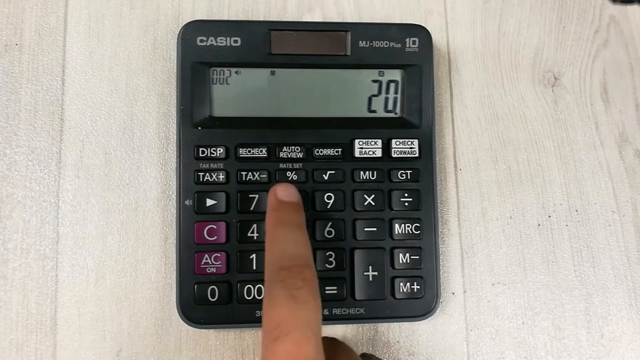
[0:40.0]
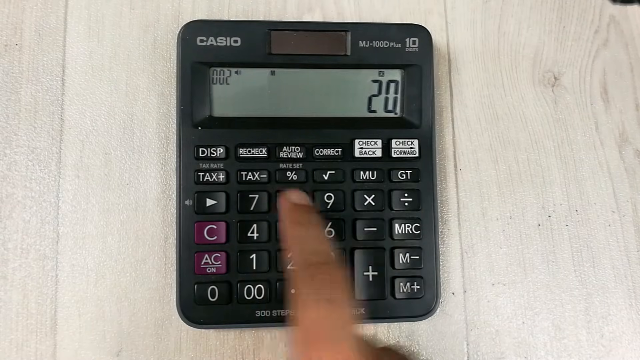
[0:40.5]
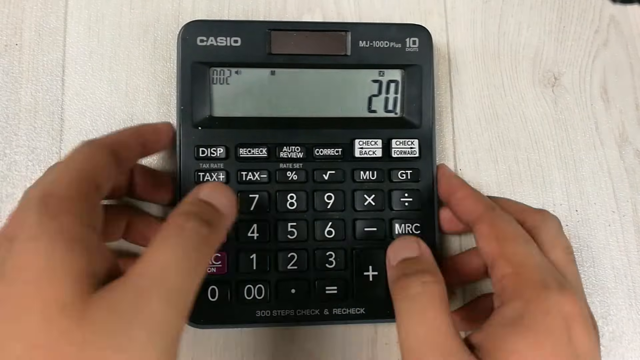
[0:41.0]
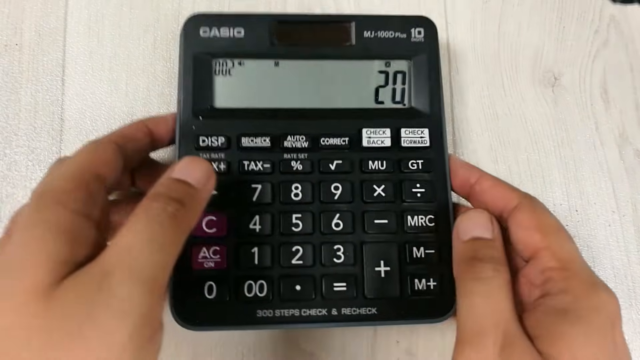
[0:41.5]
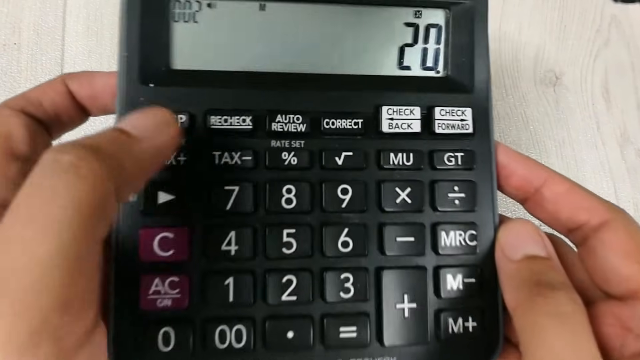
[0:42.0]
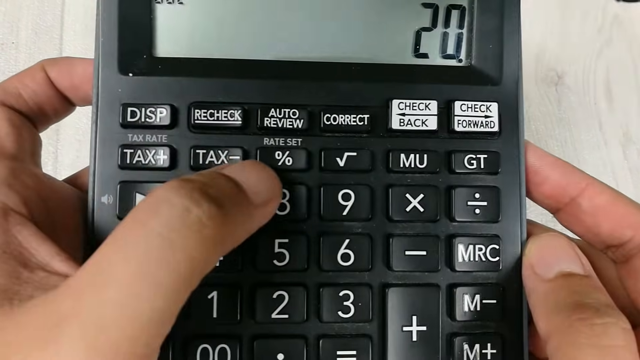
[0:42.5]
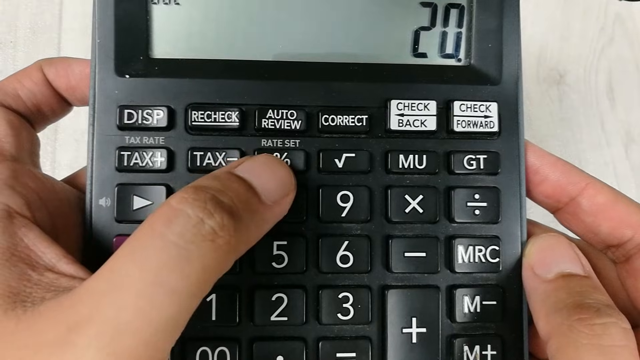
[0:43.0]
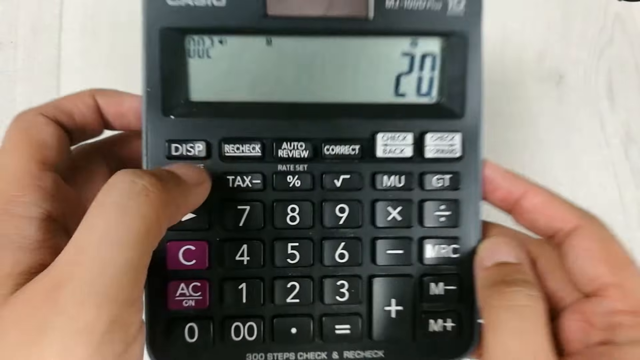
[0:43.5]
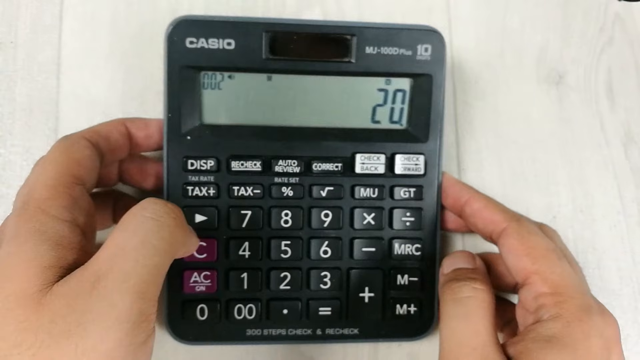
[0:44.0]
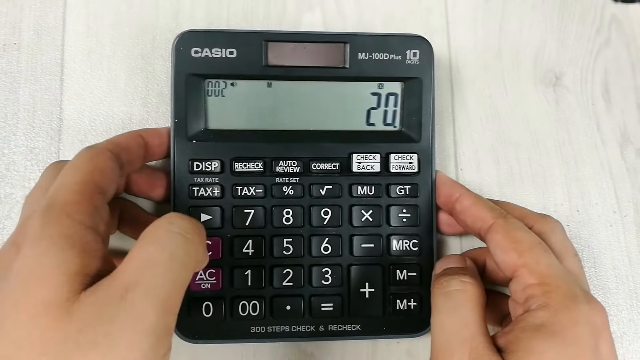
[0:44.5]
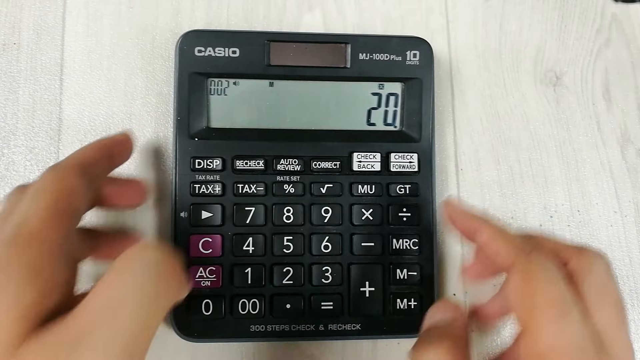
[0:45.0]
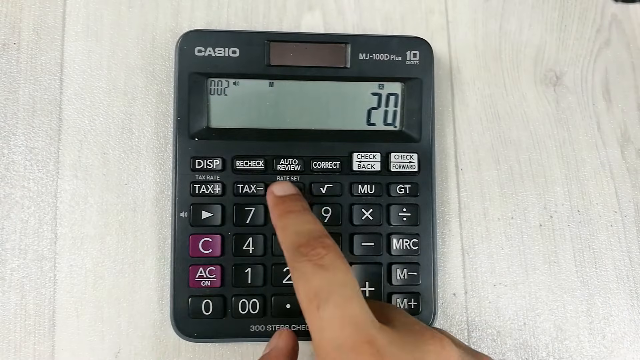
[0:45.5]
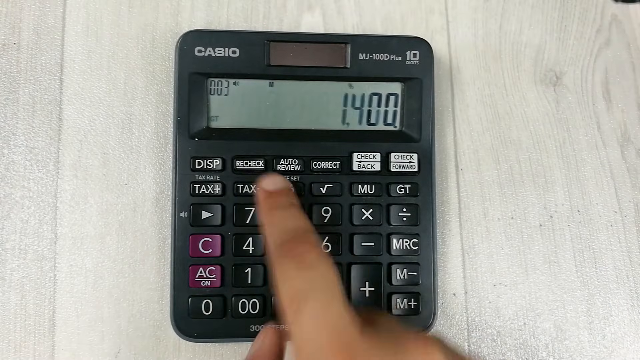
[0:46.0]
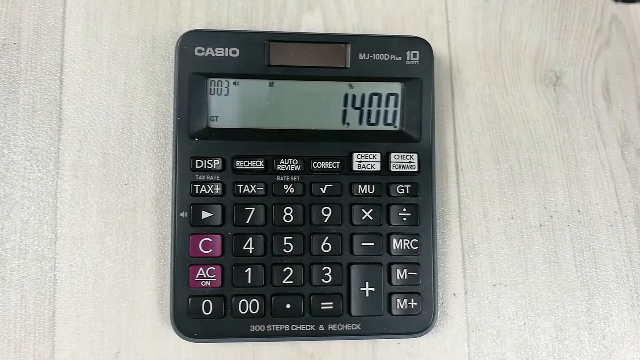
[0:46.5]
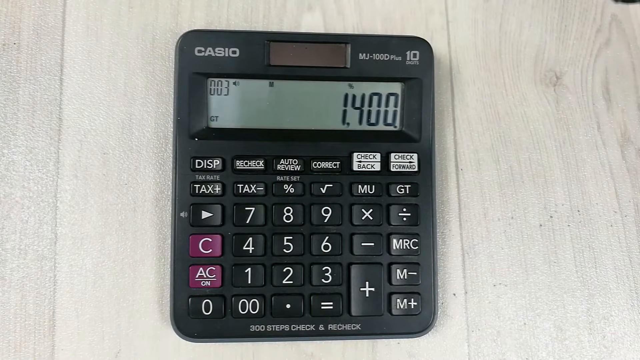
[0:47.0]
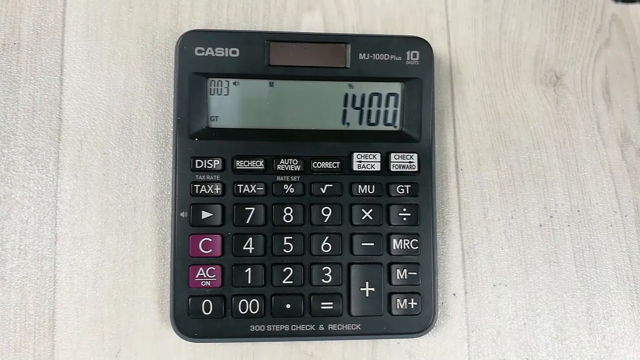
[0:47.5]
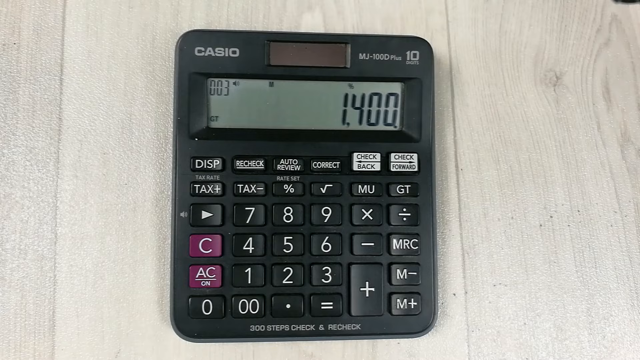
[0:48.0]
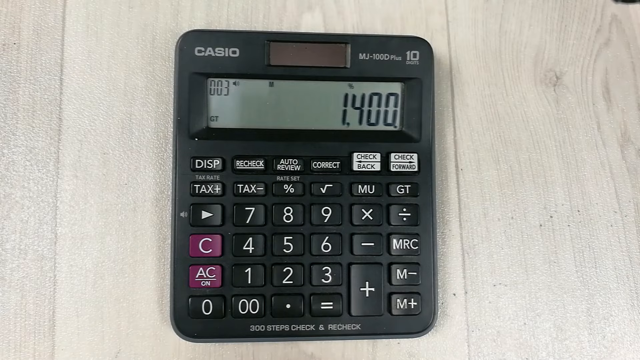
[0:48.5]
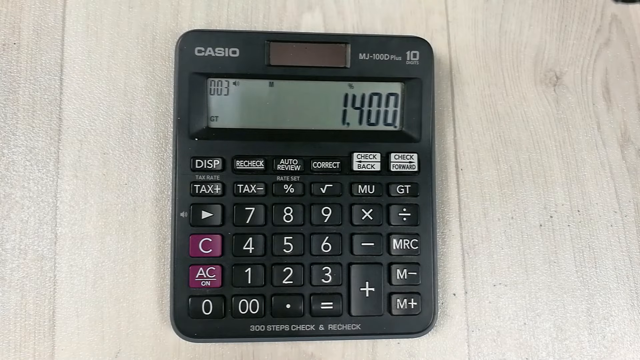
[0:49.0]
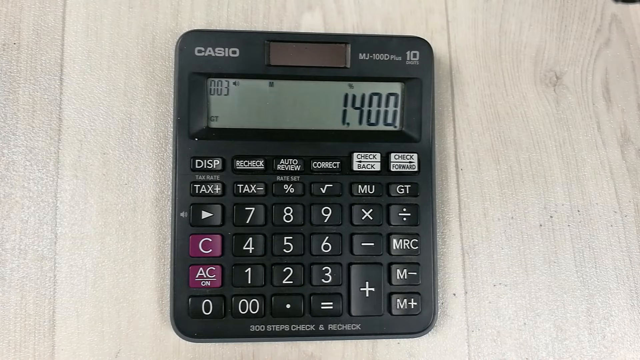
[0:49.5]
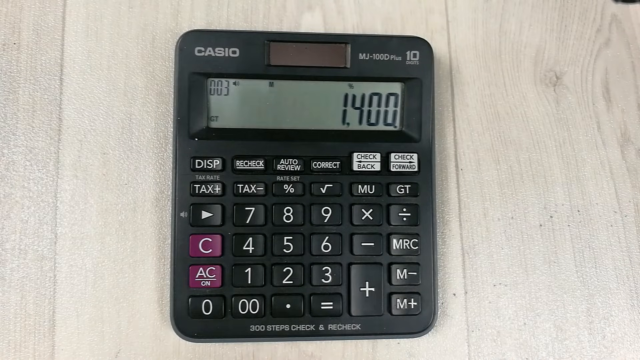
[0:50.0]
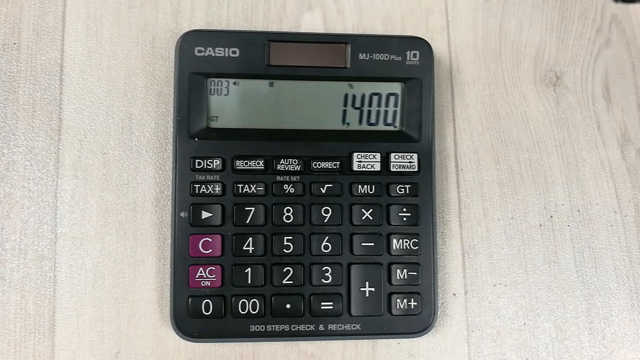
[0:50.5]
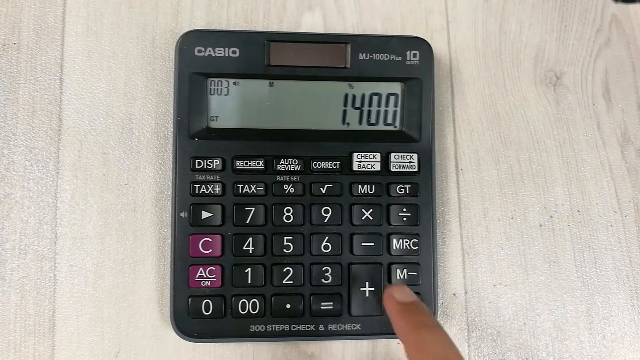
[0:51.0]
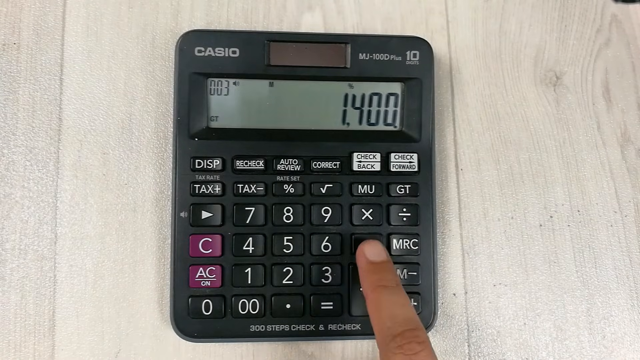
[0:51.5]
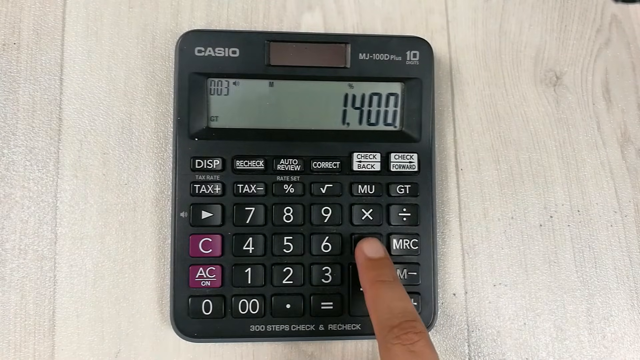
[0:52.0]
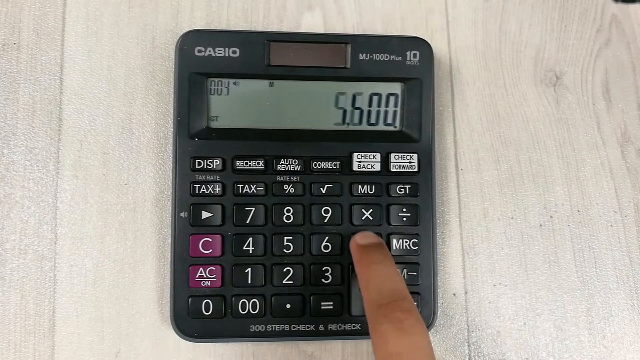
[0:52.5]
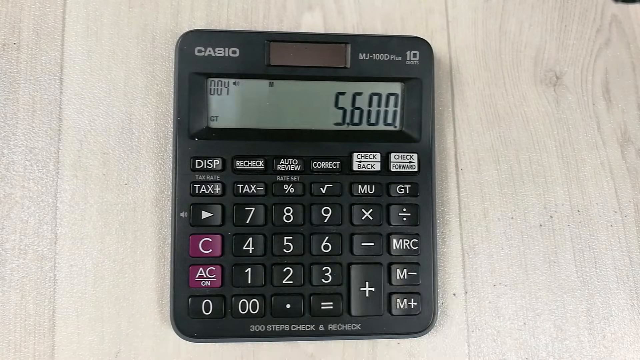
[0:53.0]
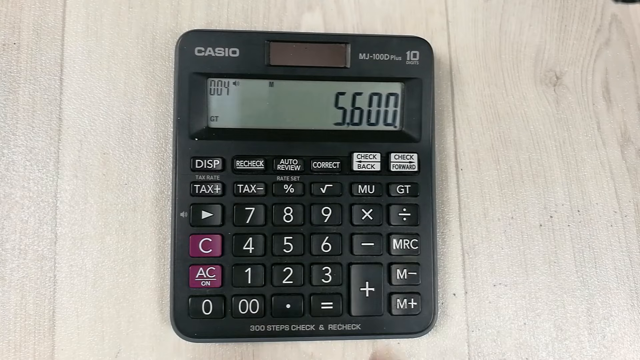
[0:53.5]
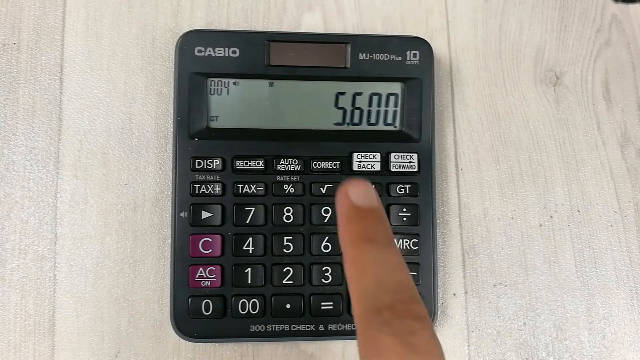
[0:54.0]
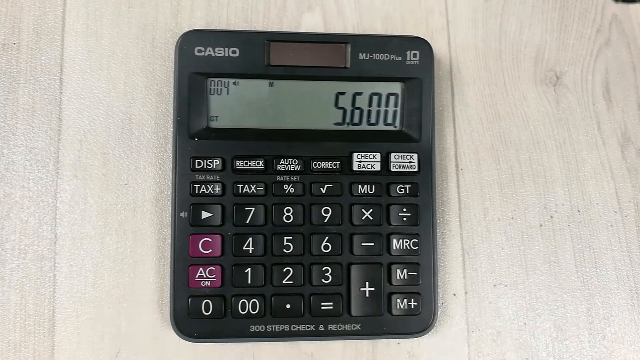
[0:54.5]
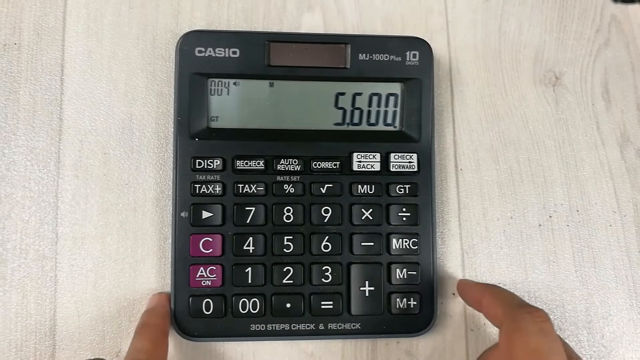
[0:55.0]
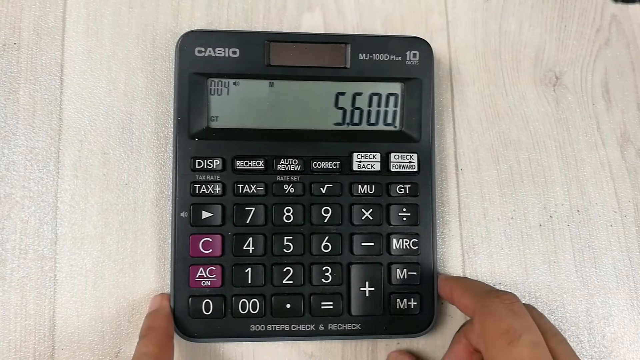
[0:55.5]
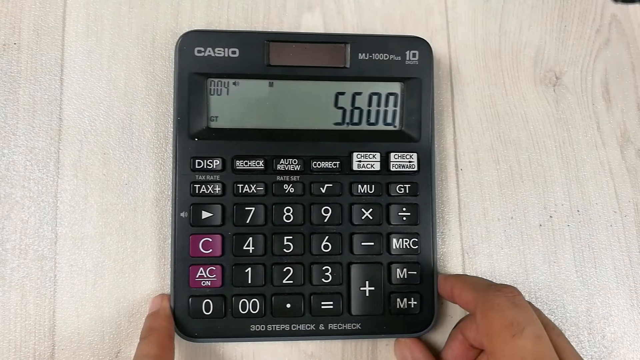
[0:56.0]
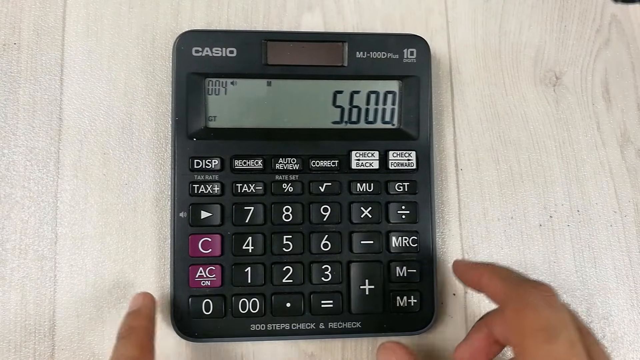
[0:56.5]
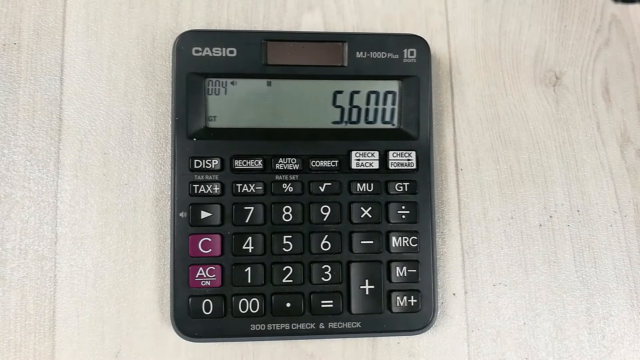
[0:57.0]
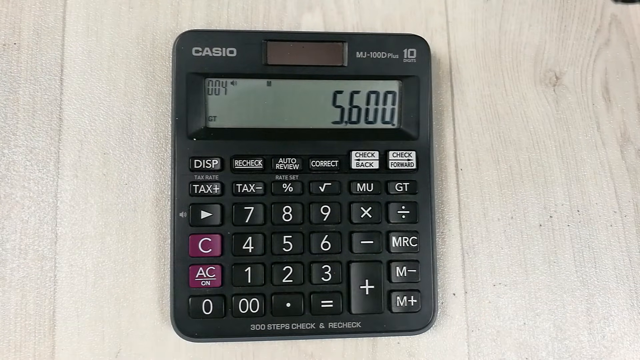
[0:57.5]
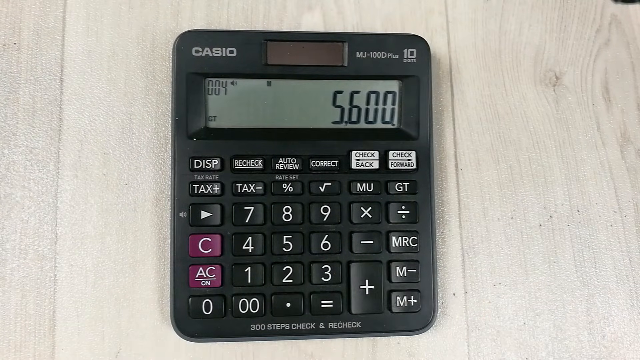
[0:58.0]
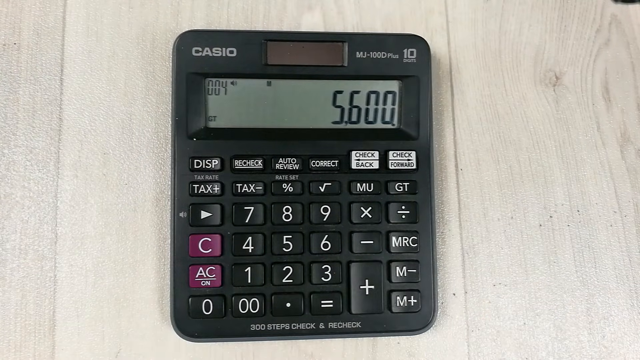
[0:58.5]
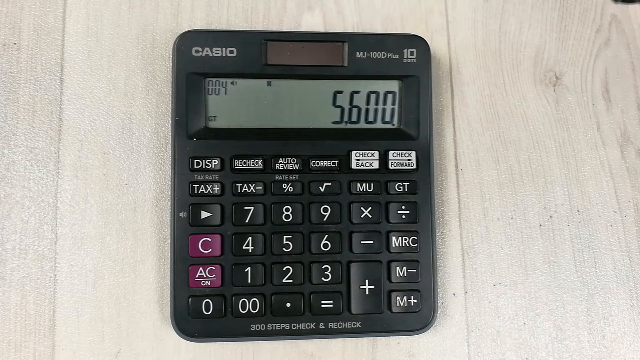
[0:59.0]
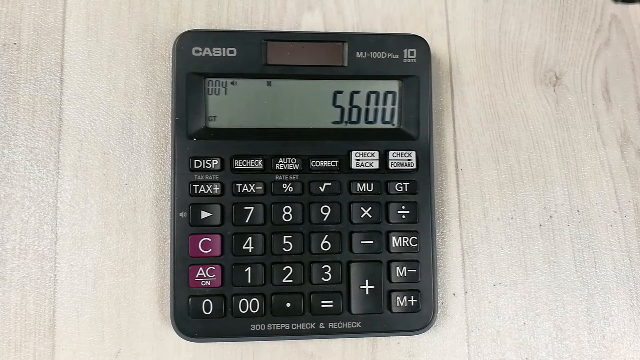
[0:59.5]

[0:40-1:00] The person picks up the black Casio calculator with both hands and touches, with their left thumb, a percent sign that is over the number 8. They set the calculator back down and press that percent button with the index finger of their right hand, changing the display to 1,400. They then press the minus sign, which changes the number to 5,600, and adjust the bottom of the calculator a little. It is the same shot throughout with no cuts, and the wrists of the person operating the calculator are not visible. The calculator rests on a wooden table. When the person brings the calculator up to the screen, the buttons are seen to be shiny and matte.